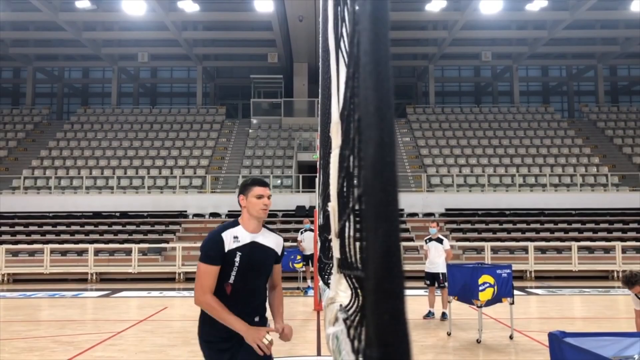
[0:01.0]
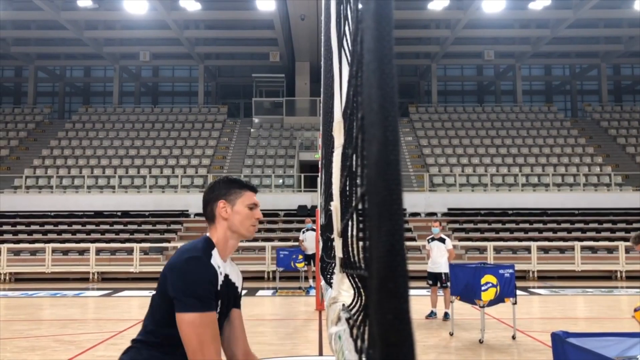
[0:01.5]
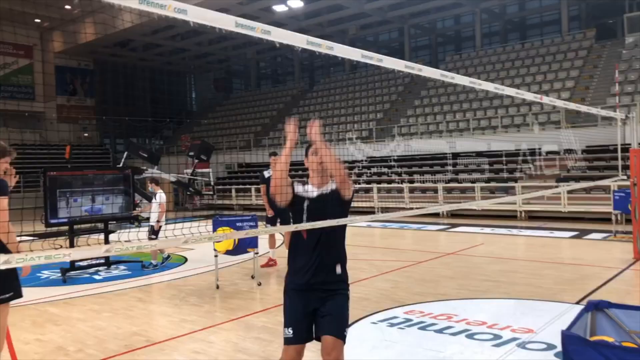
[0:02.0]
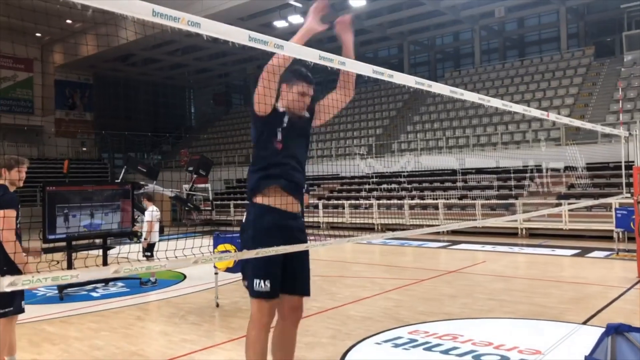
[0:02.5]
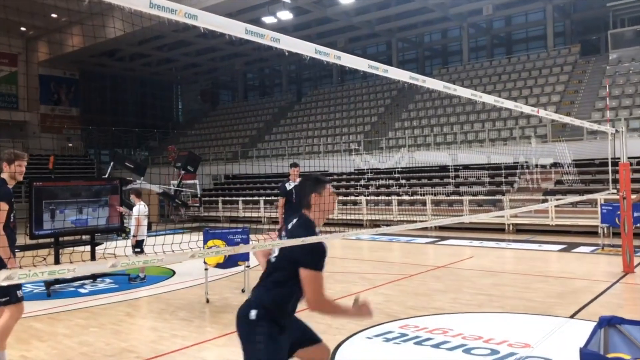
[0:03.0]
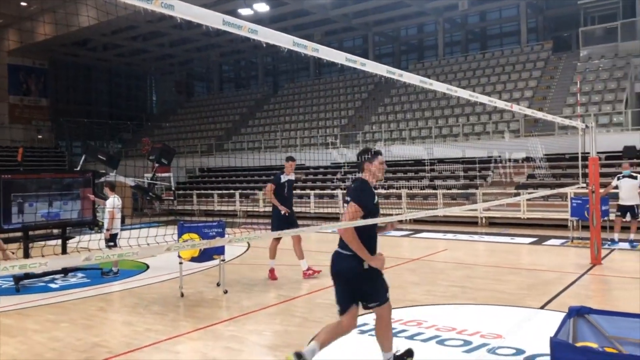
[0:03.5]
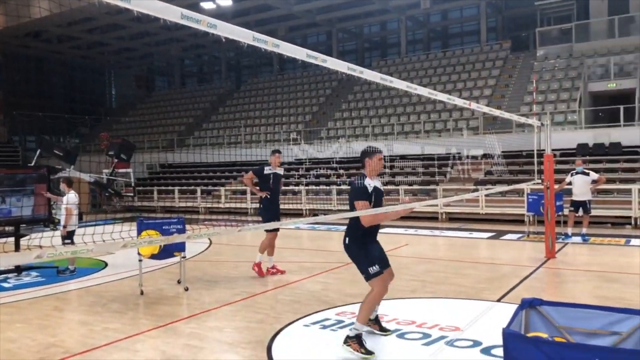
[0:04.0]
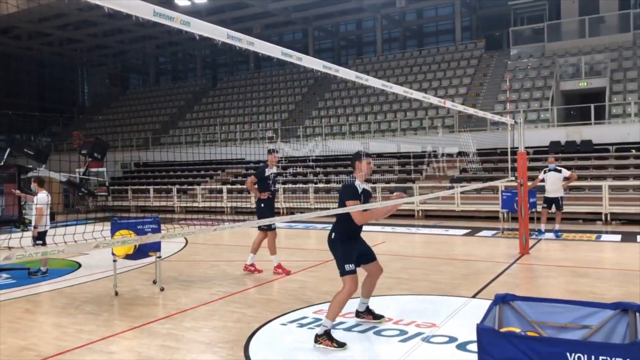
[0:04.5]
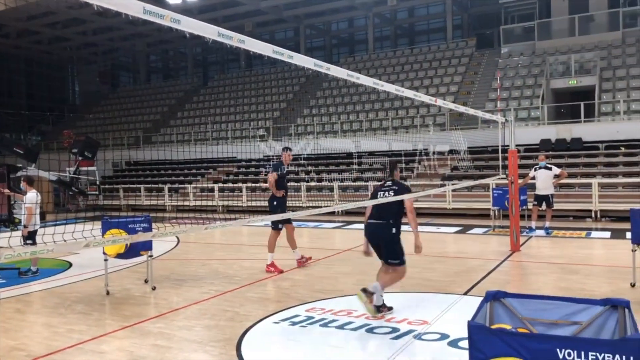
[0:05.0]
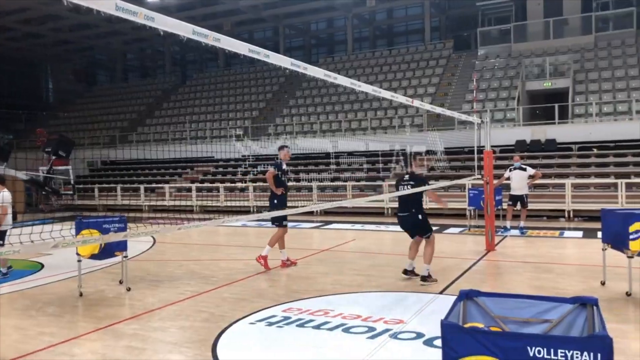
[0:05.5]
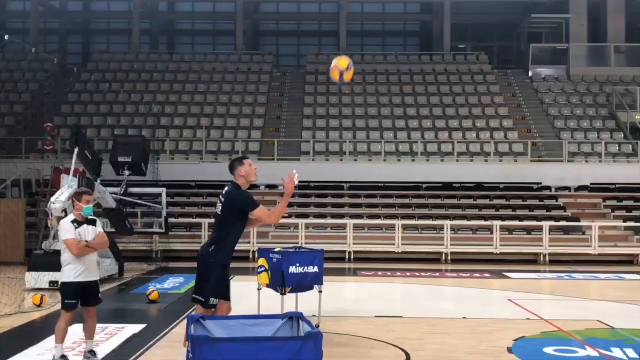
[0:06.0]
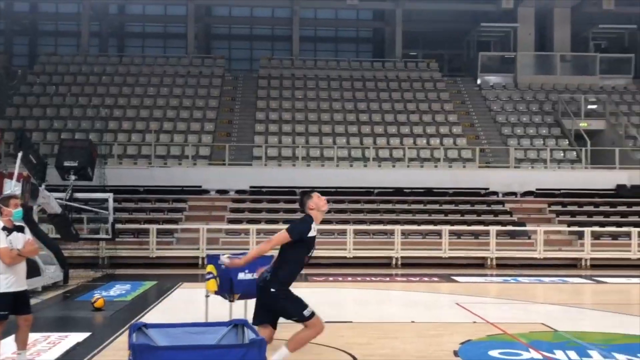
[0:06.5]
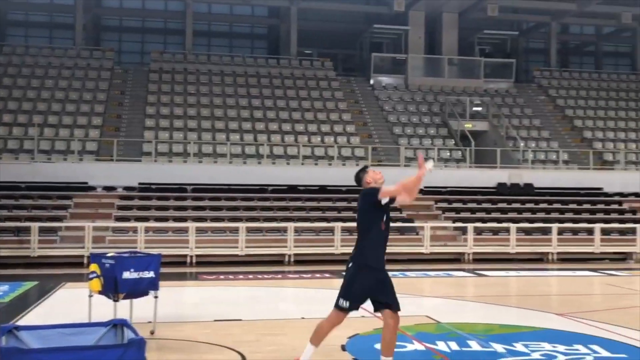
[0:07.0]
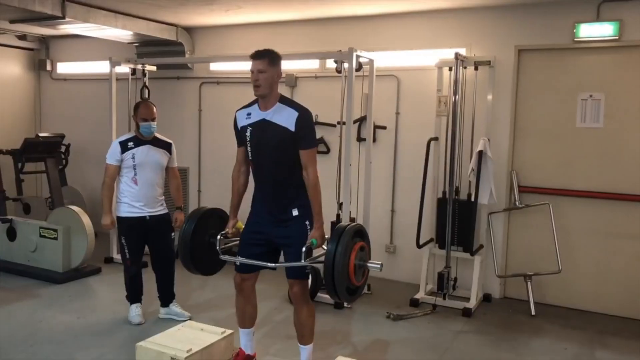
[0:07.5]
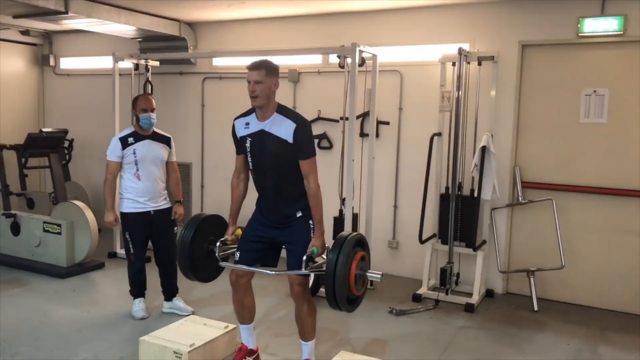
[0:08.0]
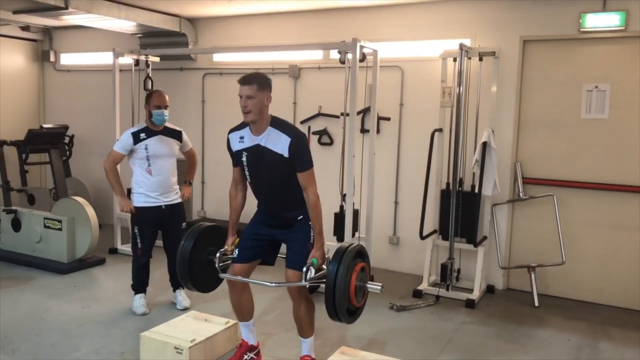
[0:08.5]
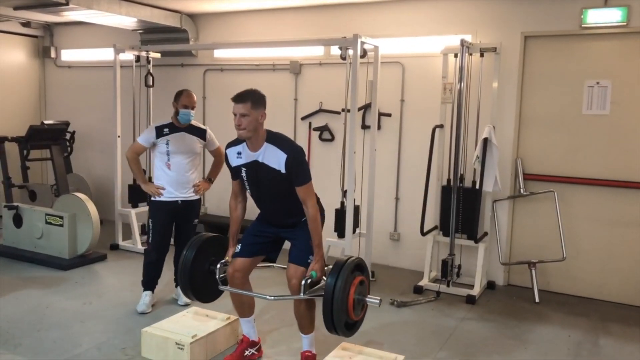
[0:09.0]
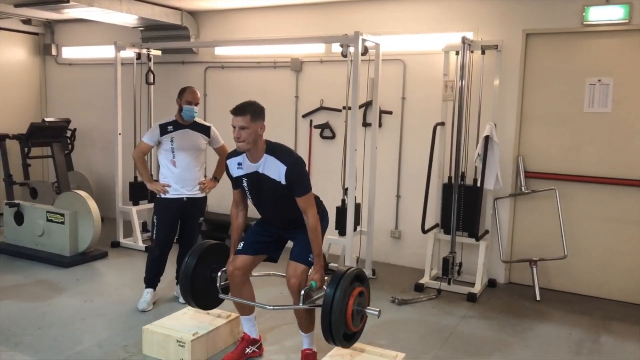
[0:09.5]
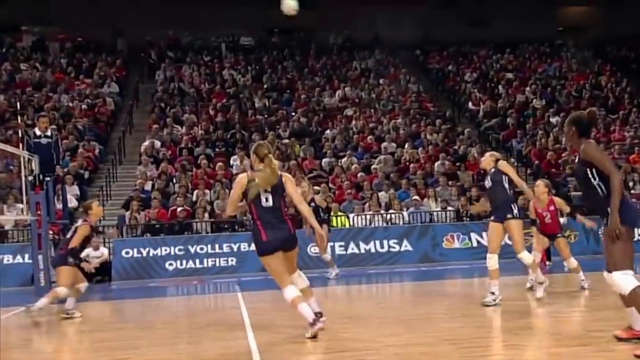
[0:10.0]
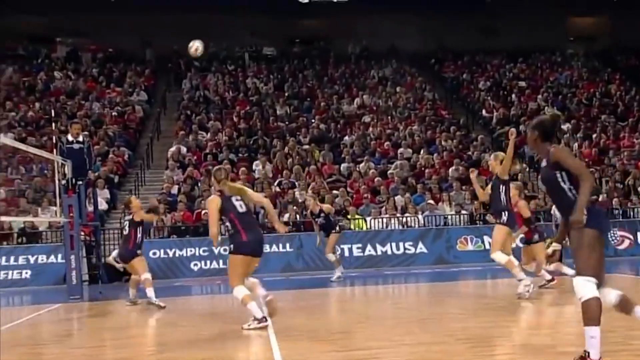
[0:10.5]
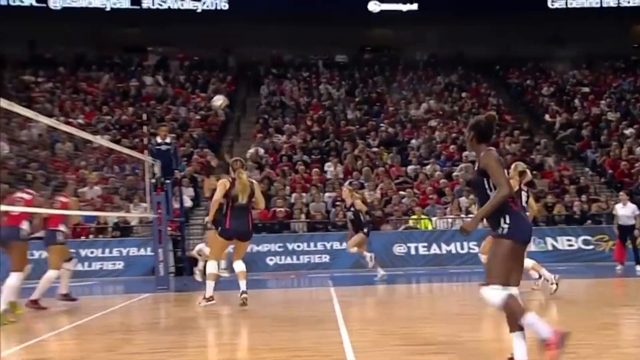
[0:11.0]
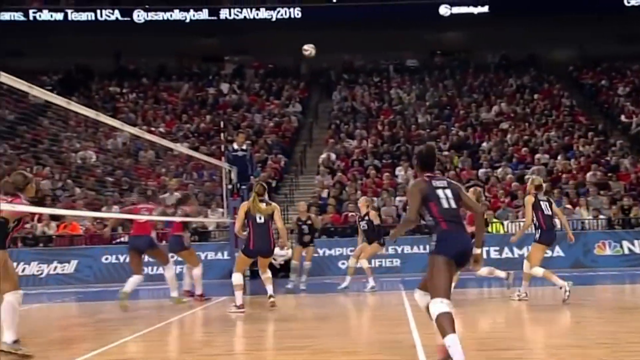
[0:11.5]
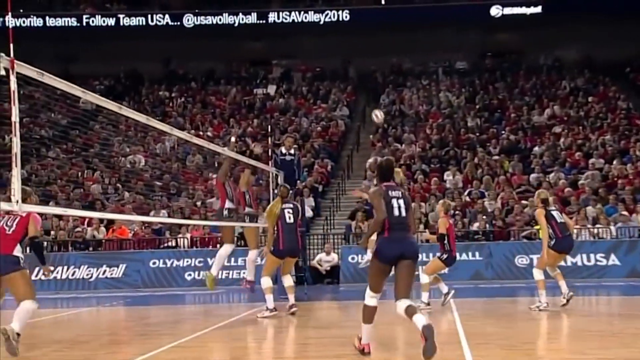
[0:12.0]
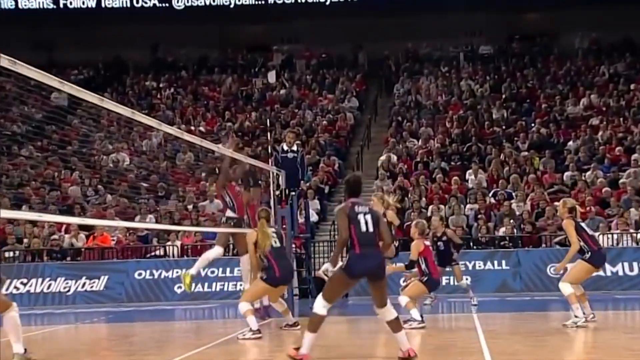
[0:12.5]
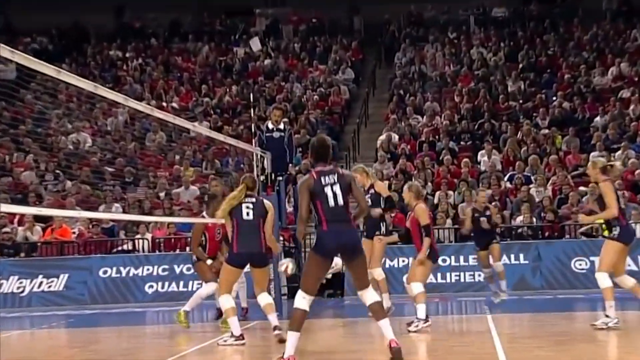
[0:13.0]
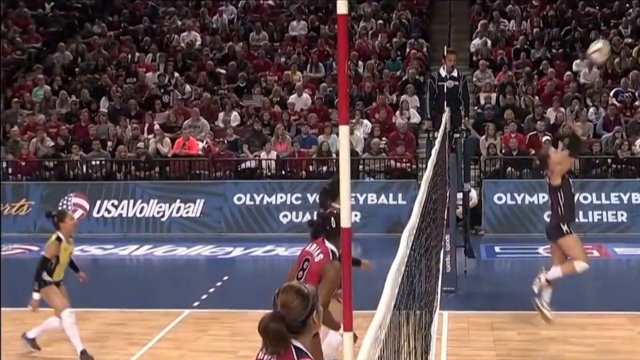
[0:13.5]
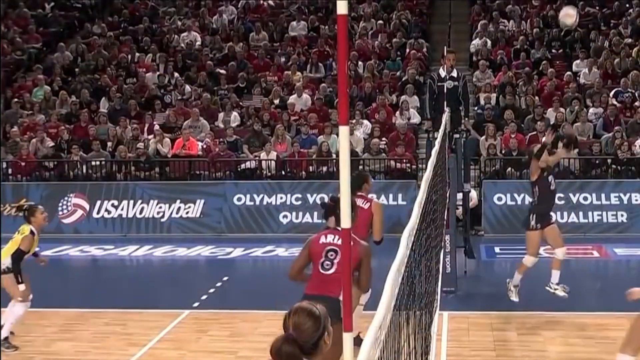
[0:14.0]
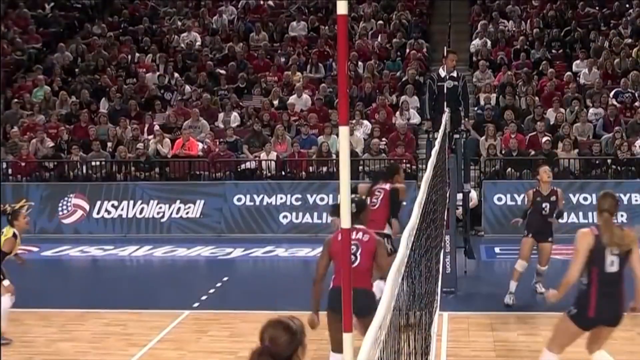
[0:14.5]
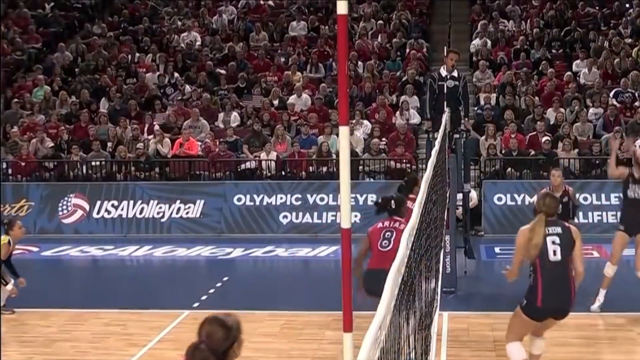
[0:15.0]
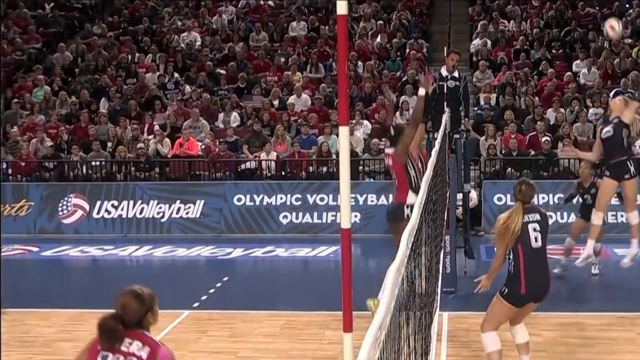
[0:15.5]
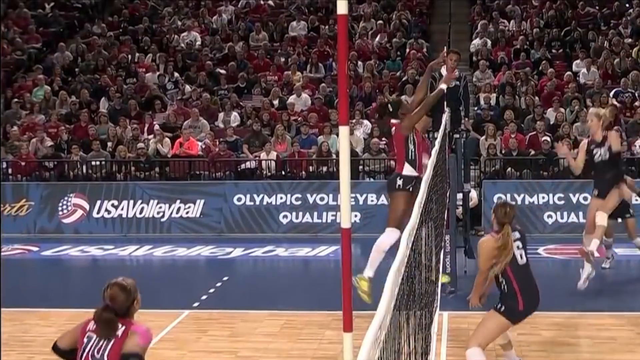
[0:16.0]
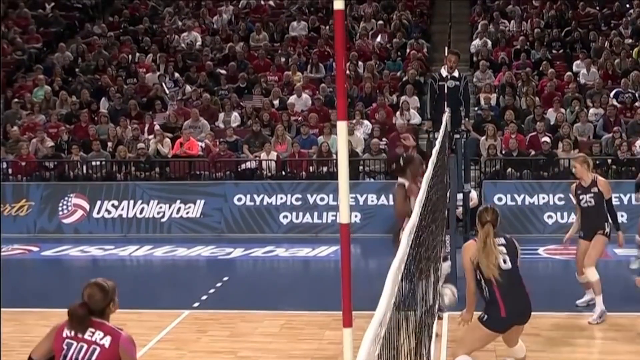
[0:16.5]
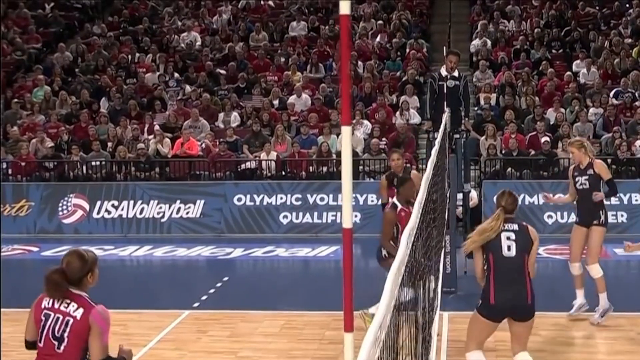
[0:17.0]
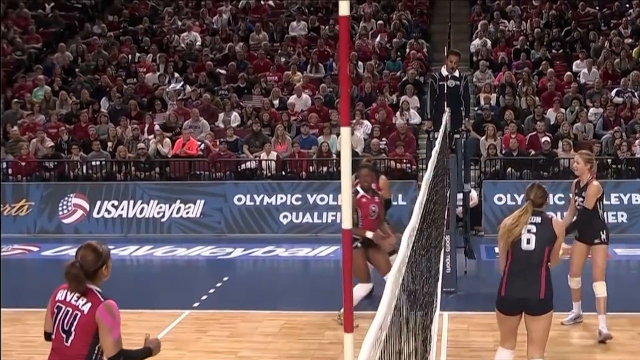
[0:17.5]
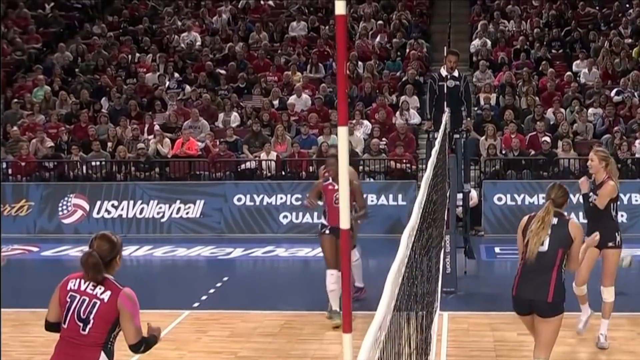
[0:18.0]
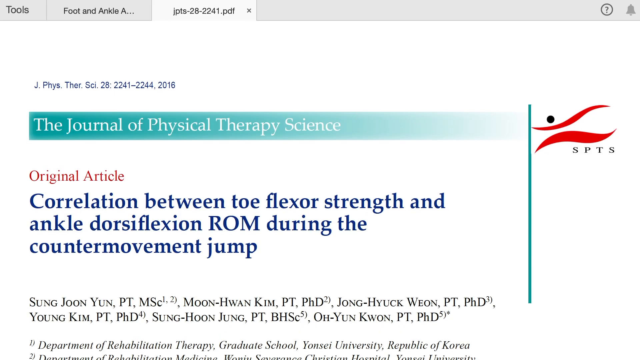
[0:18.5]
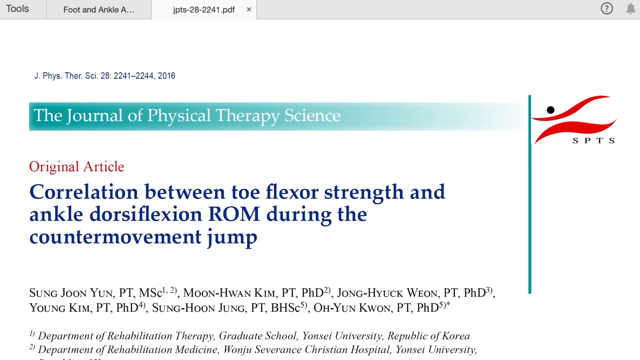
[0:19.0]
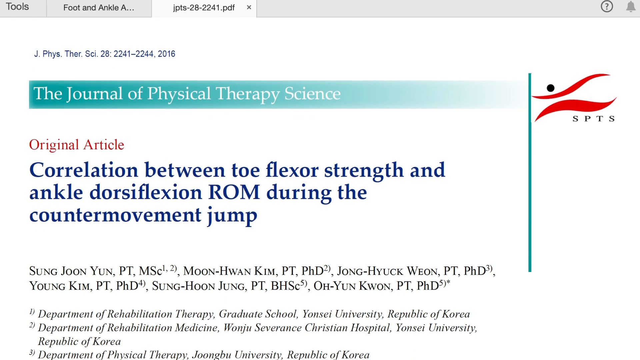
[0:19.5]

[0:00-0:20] Inside an indoor auditorium, thousands of seats run along the outside of a basketball court in the middle. A volleyball net is set up on the court, and a guy in a short-sleeved black shirt and black shorts is standing up close to the net, jumping and sticking his hands up over the top of it. A guy in a short-sleeved black shirt, black shorts and red shoes then throws a yellow volleyball up into the air, jumps up and spikes it. The video cuts to a small white room where the same man in the black shirt and black shorts is lifting a barbell. Standing to his right is a man in a white shirt, black sweatpants and white shoes who has a blue face mask on, and behind him is a white and black treadmill. Next comes a volleyball game with the stands filled with people: girls on one side of the net wear dark blue uniforms with red stripes, and girls on the other side wear red shirts and black shorts.